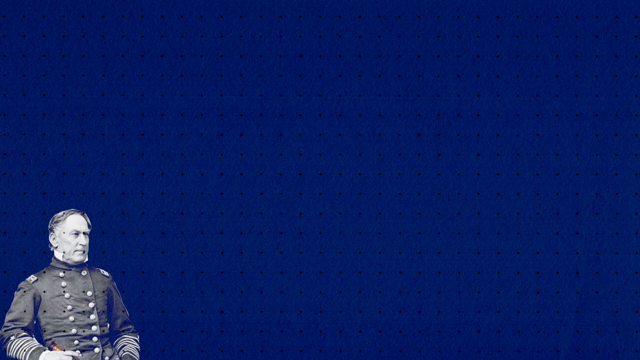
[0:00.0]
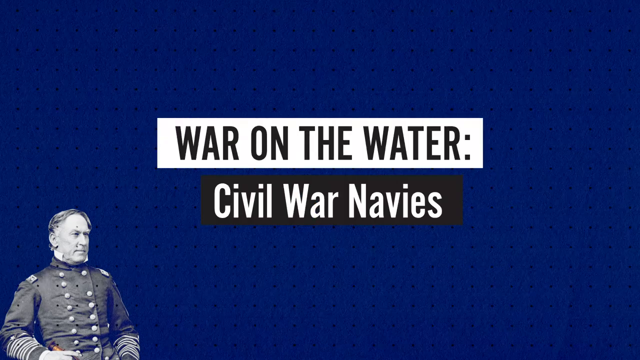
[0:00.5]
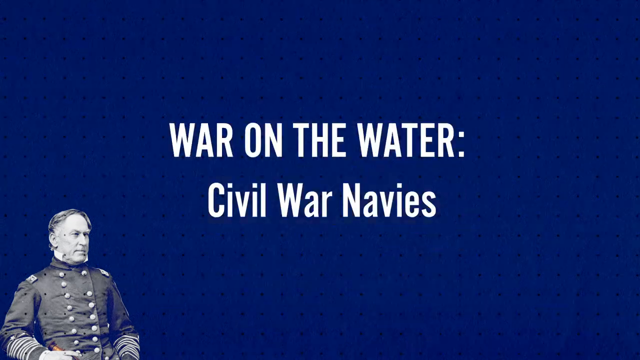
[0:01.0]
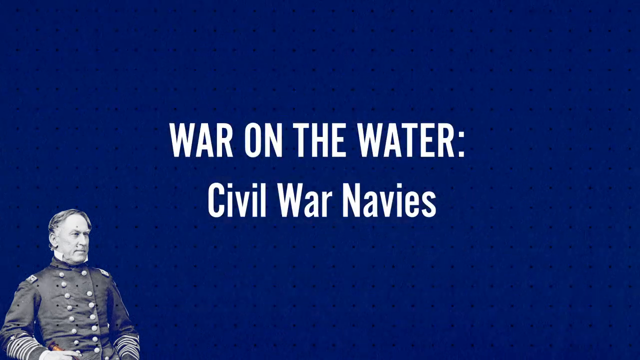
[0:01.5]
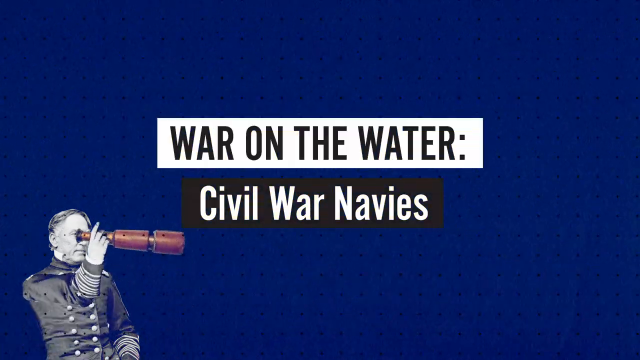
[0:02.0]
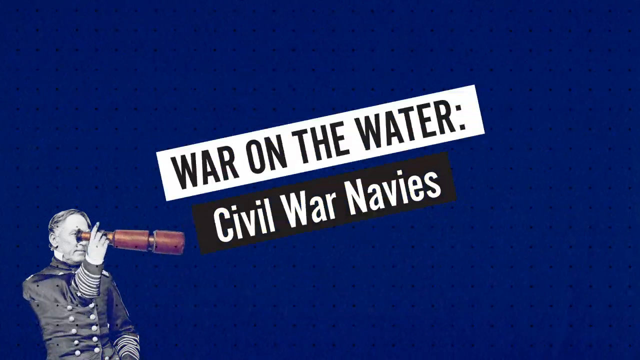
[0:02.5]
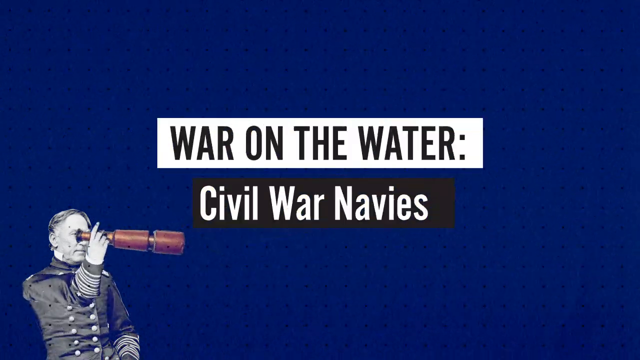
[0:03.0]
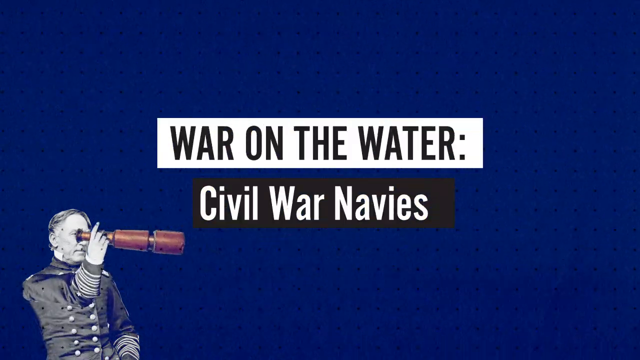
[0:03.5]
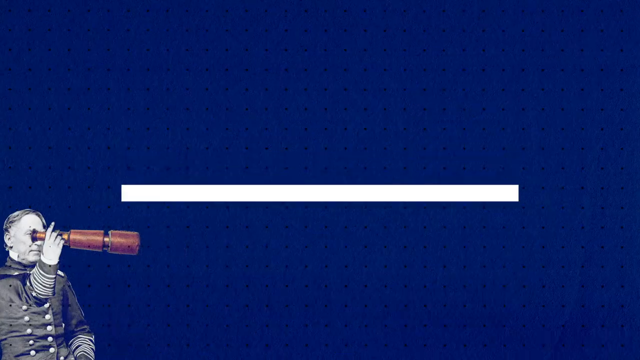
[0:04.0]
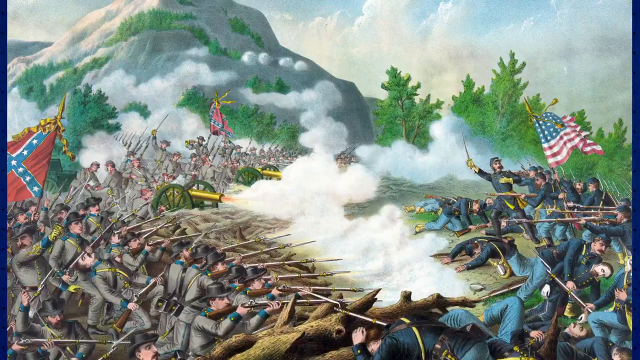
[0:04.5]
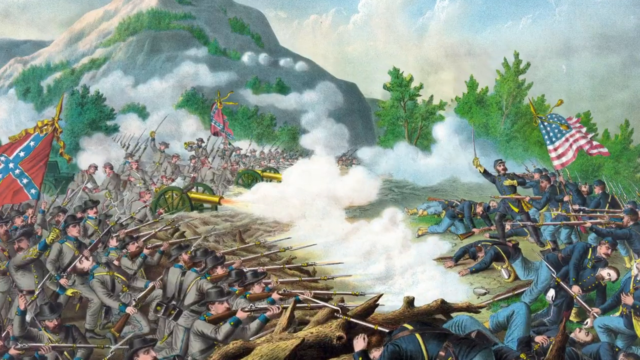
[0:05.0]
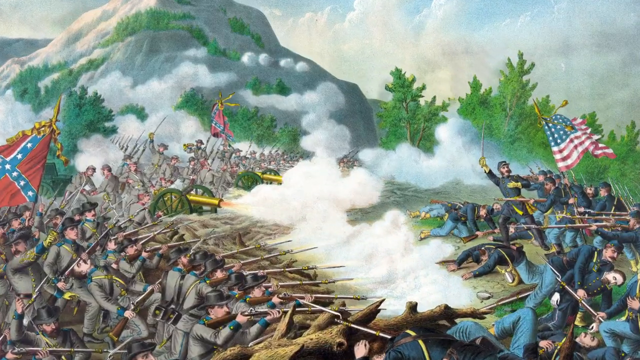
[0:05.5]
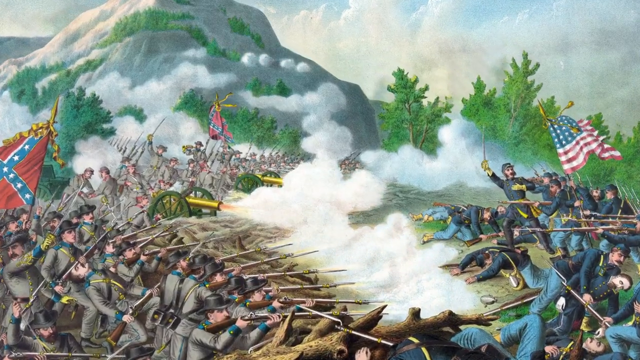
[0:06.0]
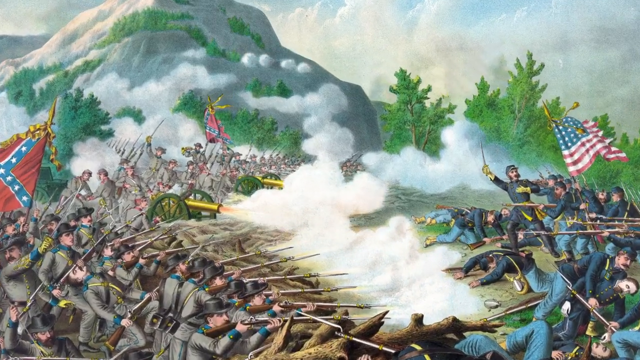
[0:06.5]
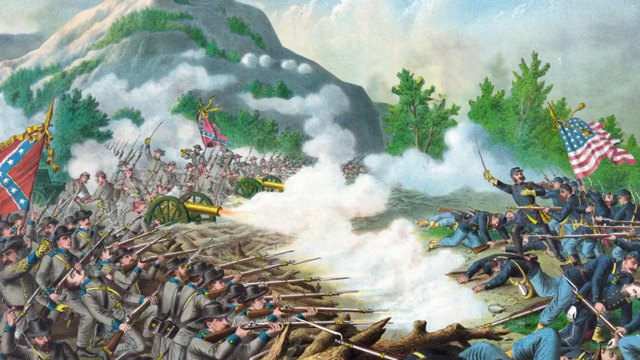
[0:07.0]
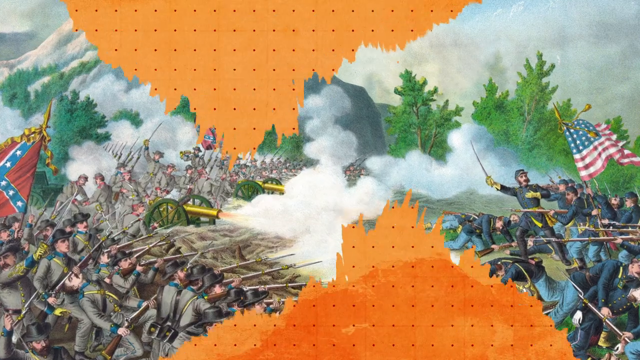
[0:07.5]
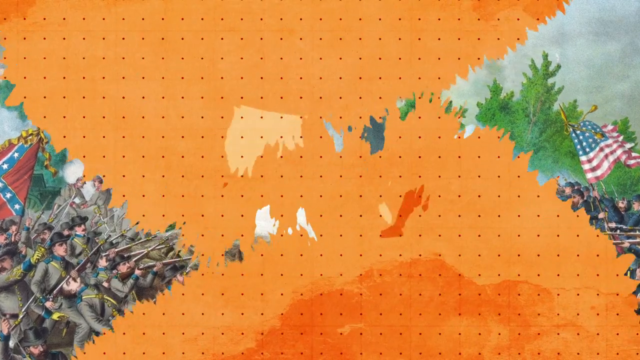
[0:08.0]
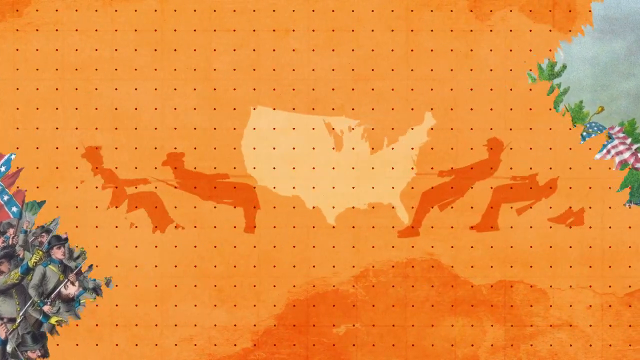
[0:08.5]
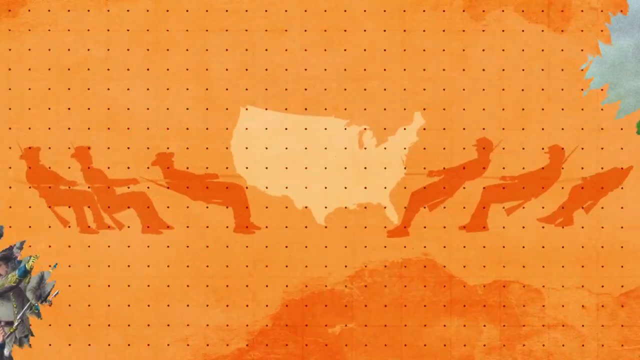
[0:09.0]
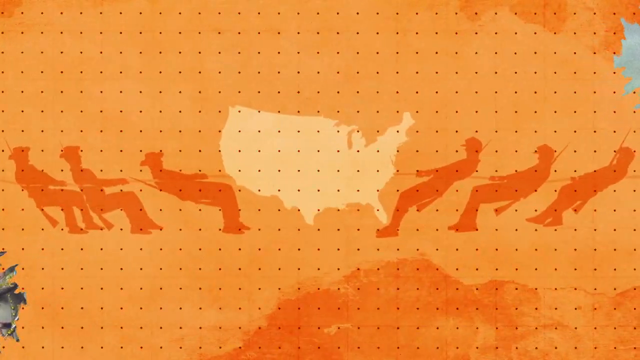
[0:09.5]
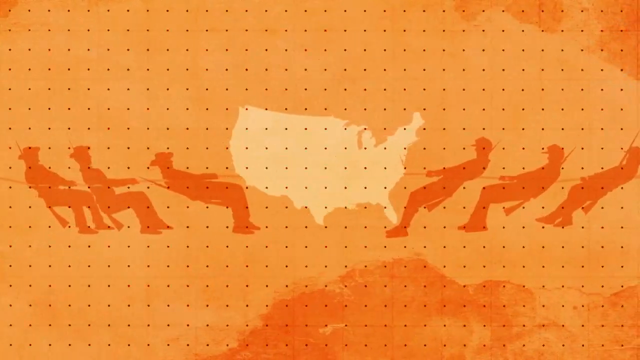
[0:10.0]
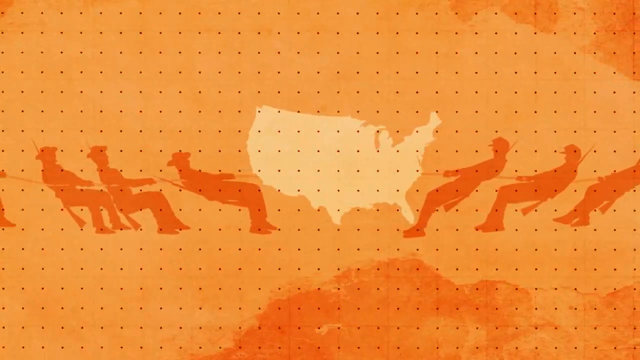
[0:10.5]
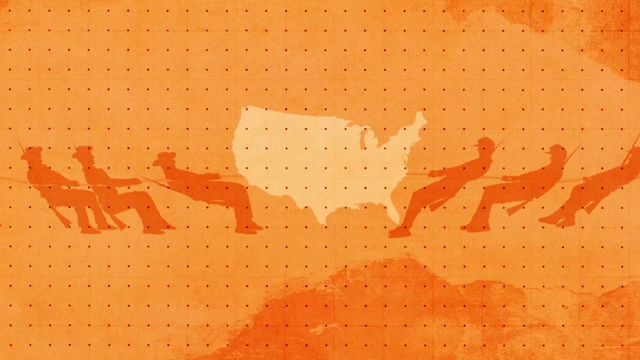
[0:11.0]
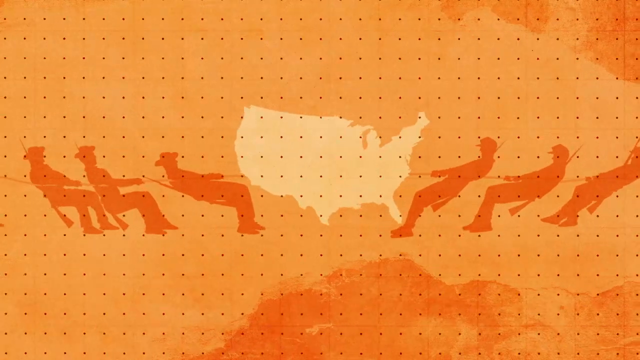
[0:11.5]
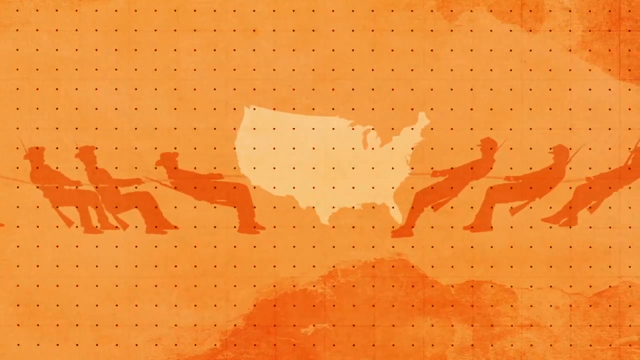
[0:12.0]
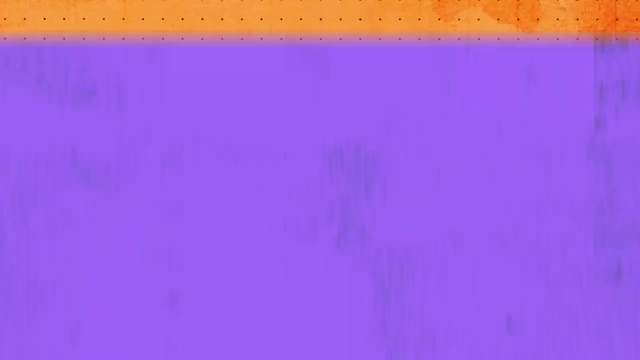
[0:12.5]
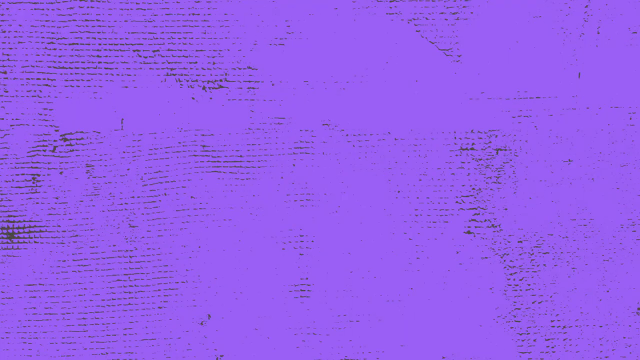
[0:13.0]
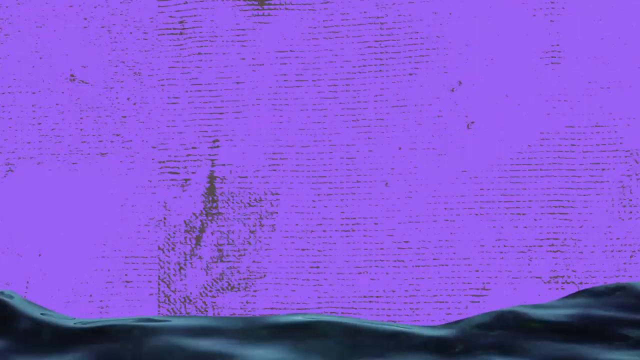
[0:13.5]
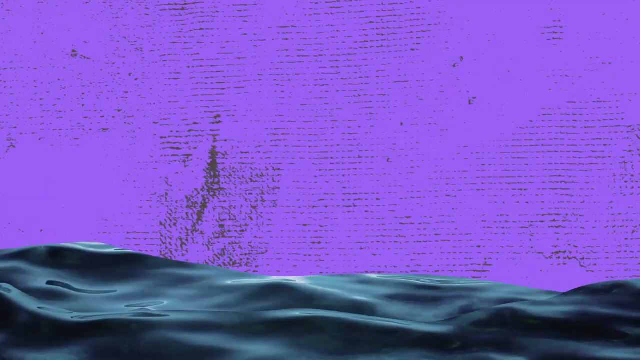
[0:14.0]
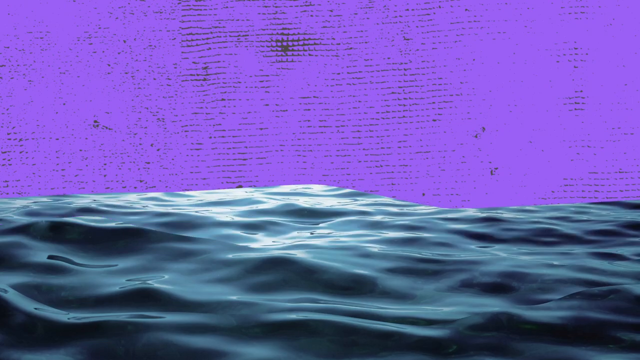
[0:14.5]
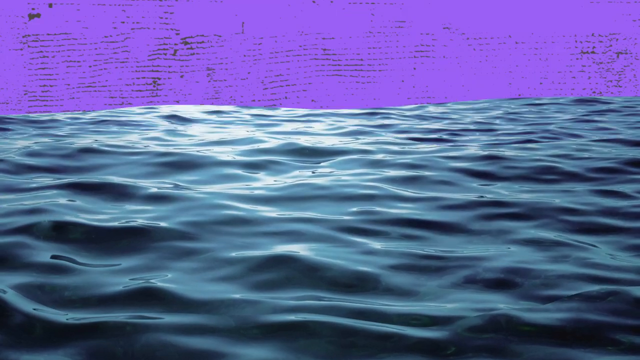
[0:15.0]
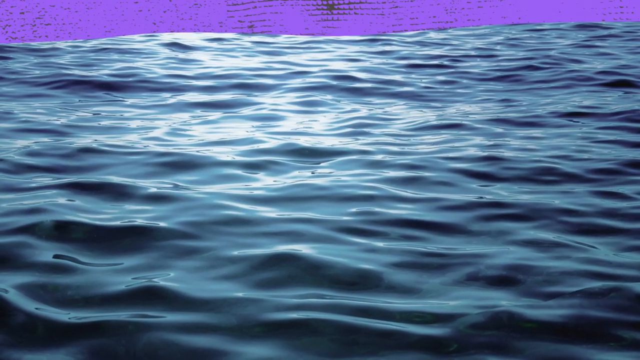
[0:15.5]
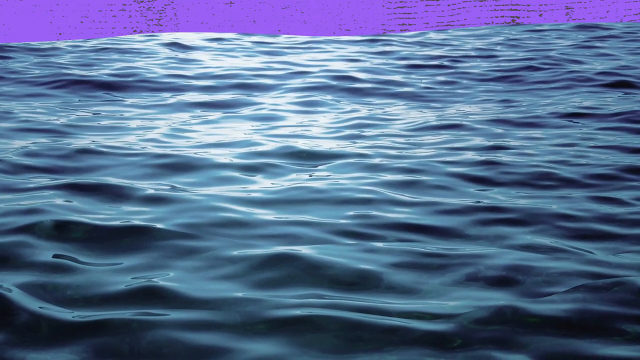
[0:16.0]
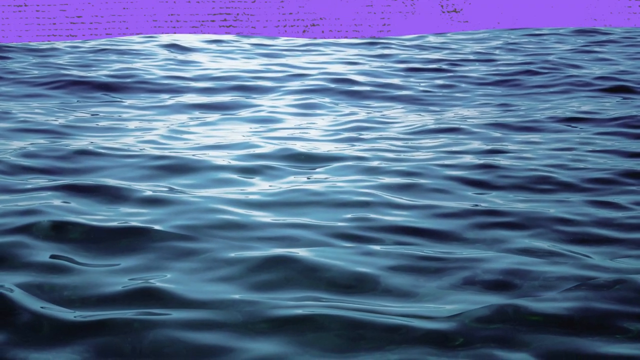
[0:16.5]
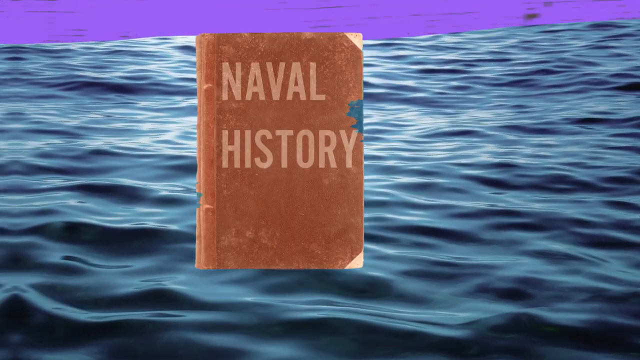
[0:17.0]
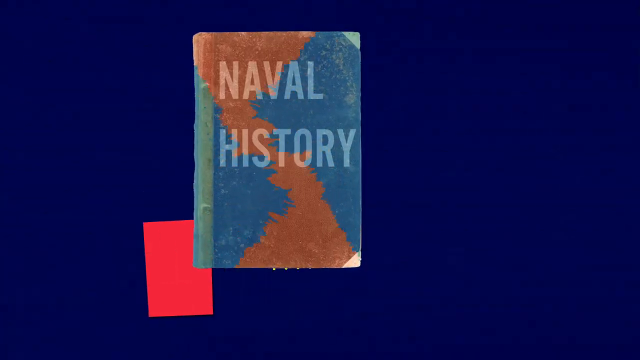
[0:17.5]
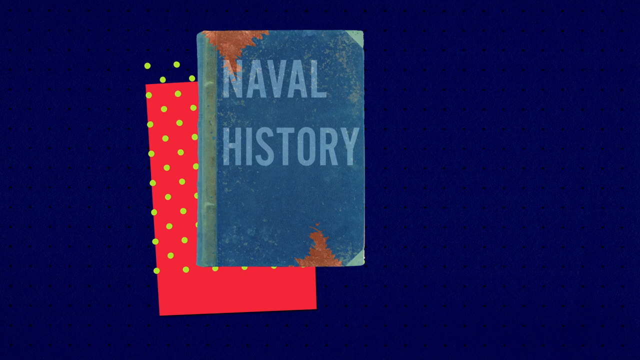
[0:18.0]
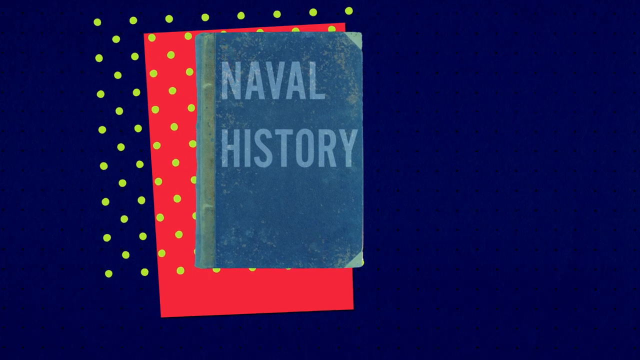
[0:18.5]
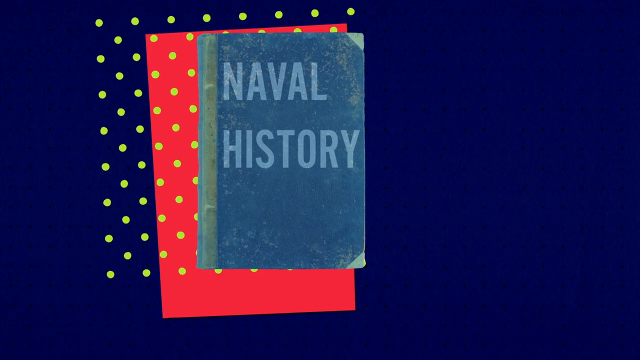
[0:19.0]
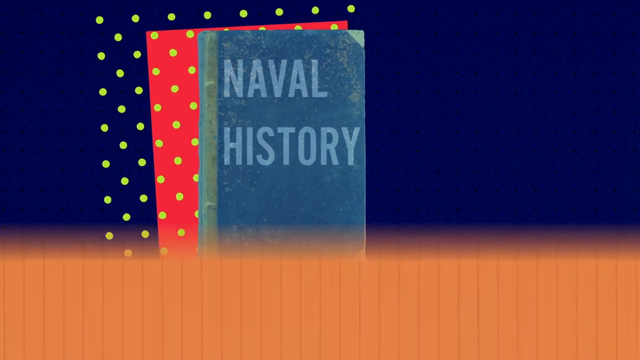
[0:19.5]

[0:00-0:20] The video opens with a title card: a white box with black print reads "war on the water:" and beneath it a black box with white print reads "Civil War navies." The background behind it is dark blue with black dots. In the bottom right corner is a figure of a man in some sort of historical, not recent, military uniform; he lifts a telescope to his eye, and the words move around a little. Next comes a mostly still image with some small moving parts, apparently an illustrated battle scene. In the back left is a large hill or maybe a mountain. On the left side is an army of many men wearing gray uniforms with yellow and light or teal blue; they have two yellow cannons with green wheels and the Confederate flag. Over on the right are people in dark navy blue with light blue pants, holding the American flag.